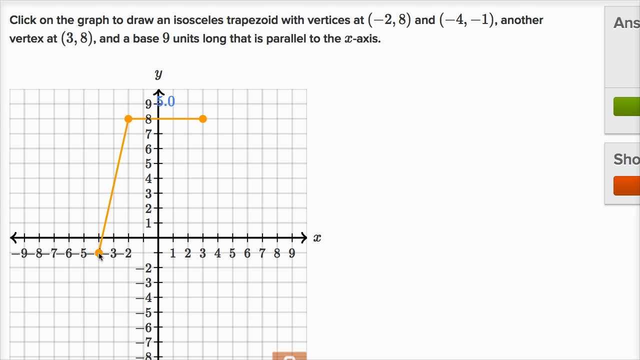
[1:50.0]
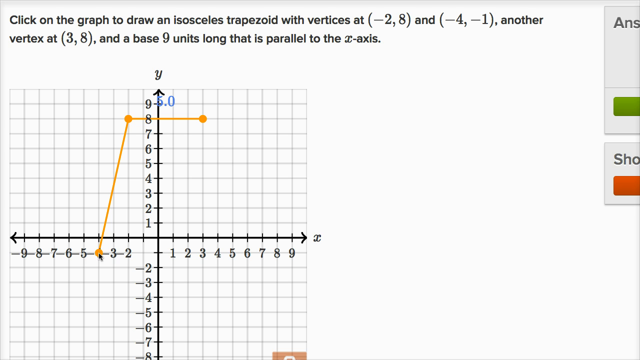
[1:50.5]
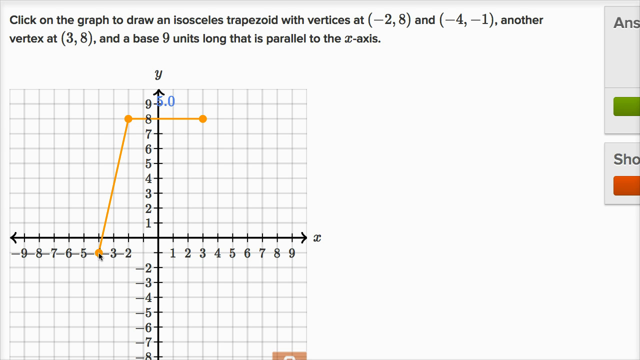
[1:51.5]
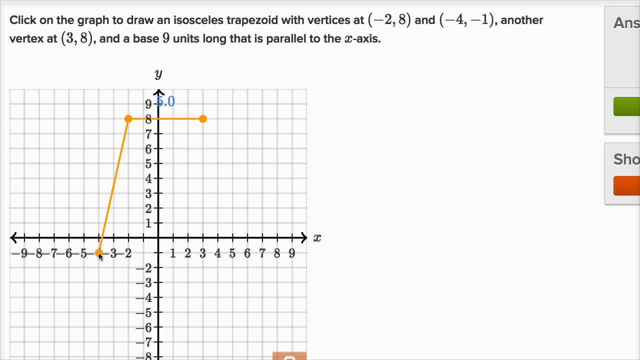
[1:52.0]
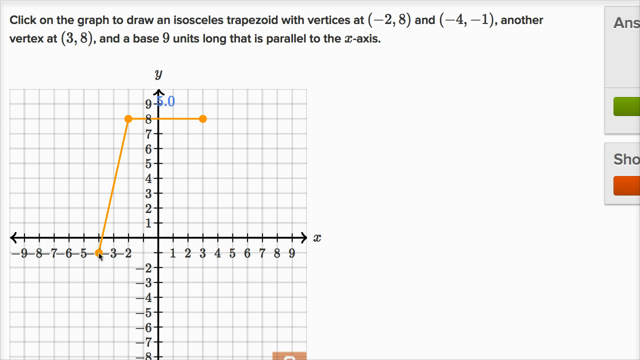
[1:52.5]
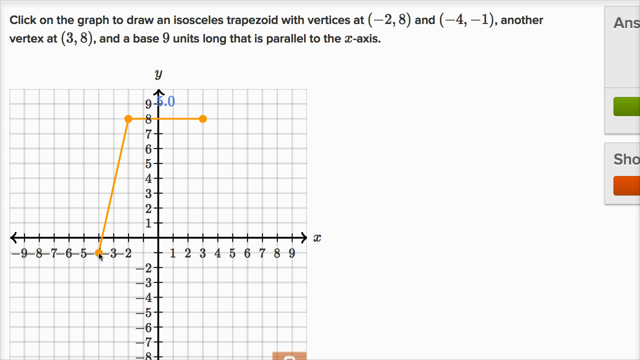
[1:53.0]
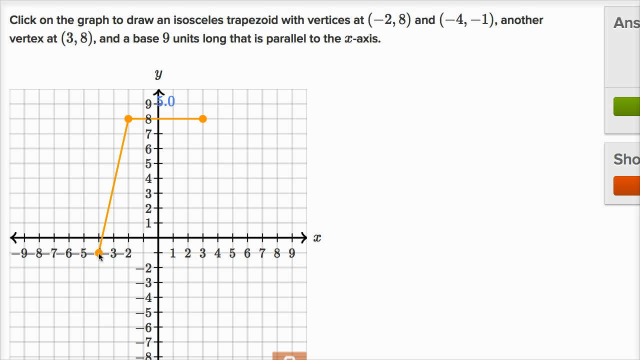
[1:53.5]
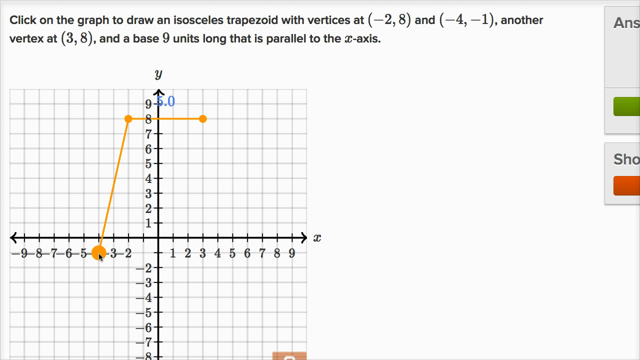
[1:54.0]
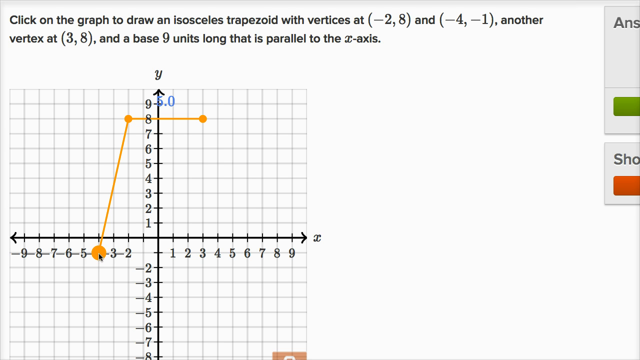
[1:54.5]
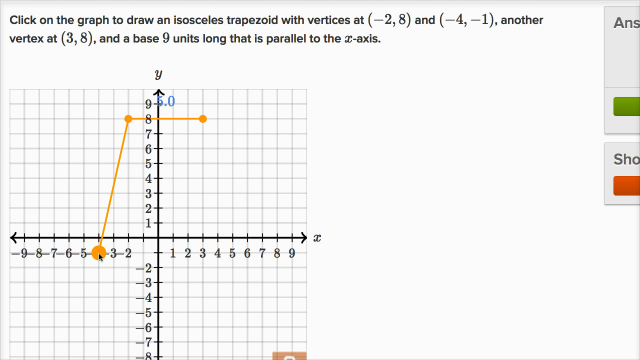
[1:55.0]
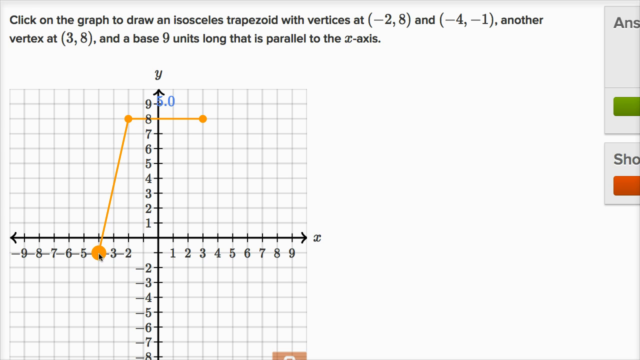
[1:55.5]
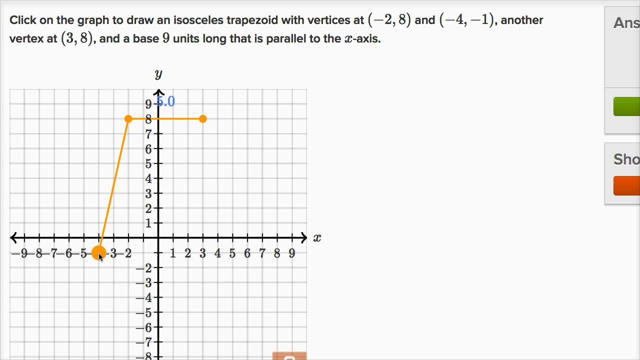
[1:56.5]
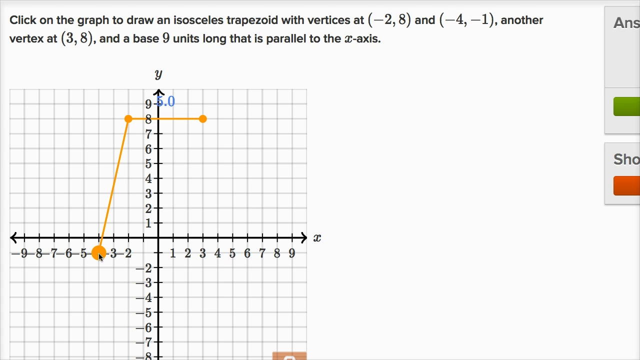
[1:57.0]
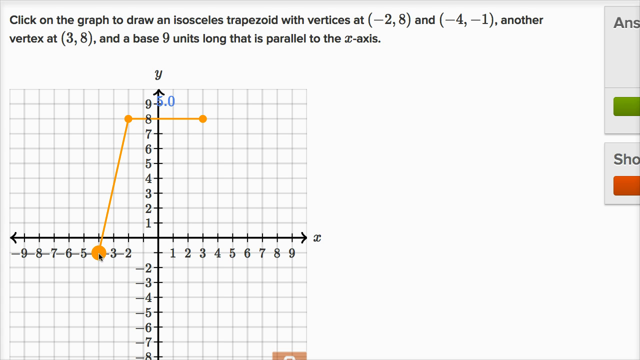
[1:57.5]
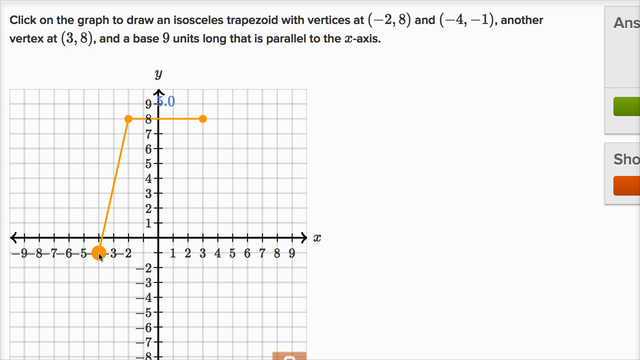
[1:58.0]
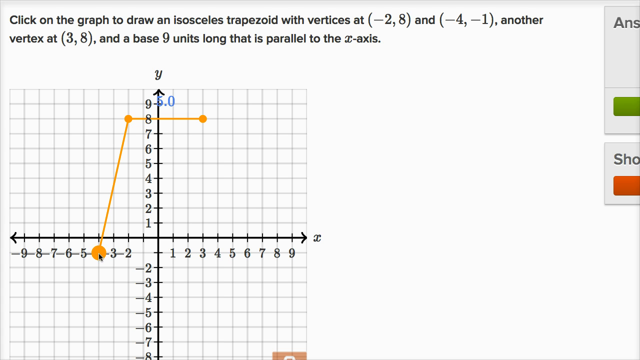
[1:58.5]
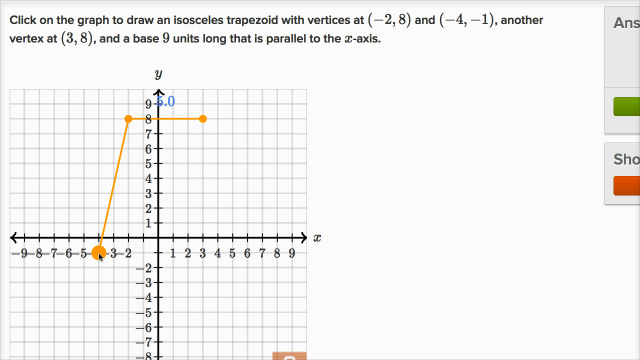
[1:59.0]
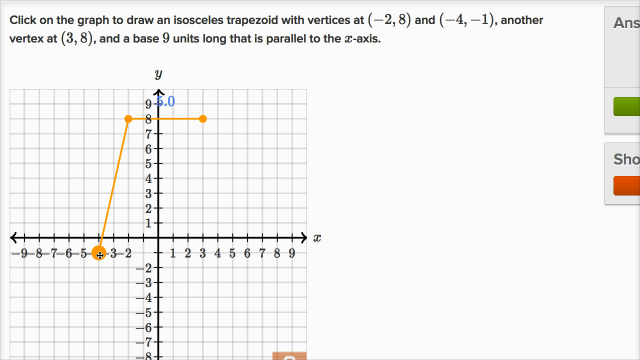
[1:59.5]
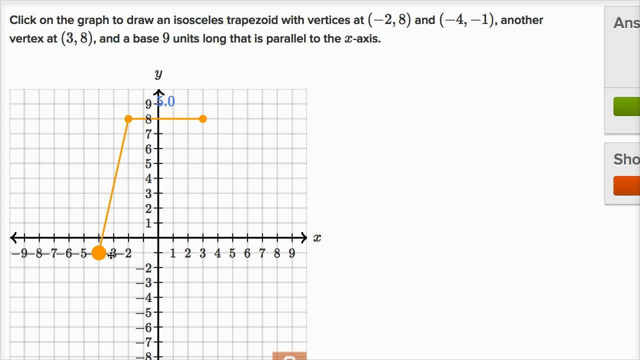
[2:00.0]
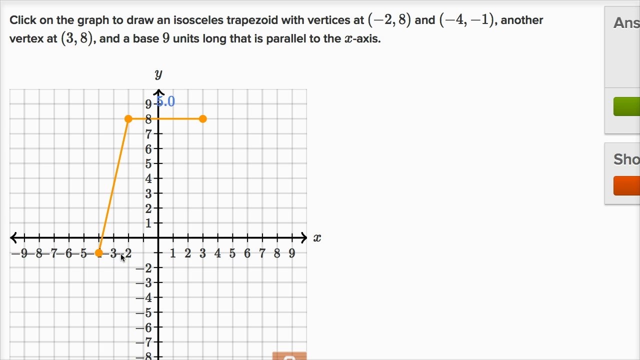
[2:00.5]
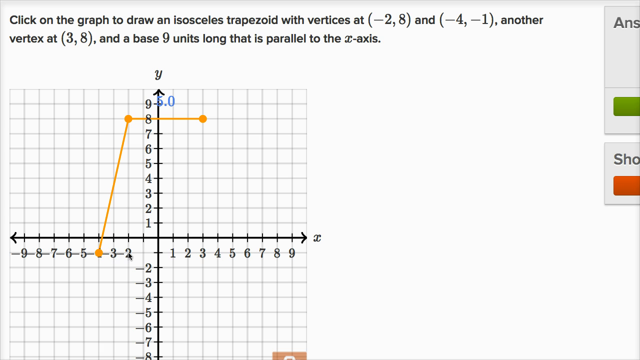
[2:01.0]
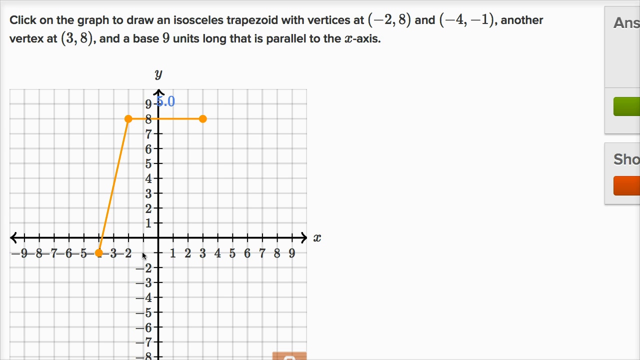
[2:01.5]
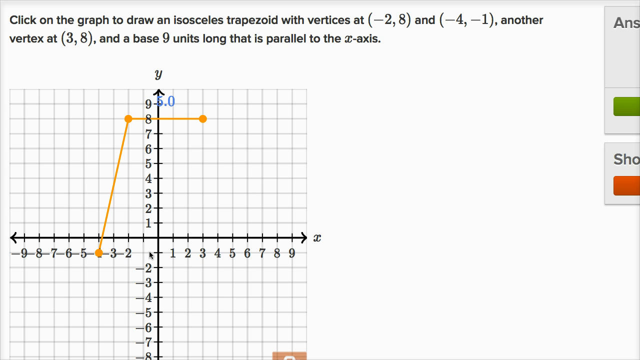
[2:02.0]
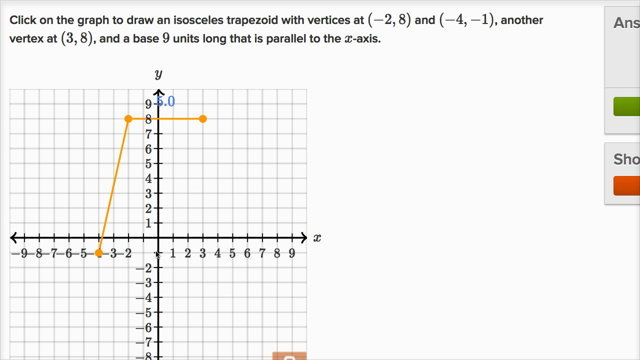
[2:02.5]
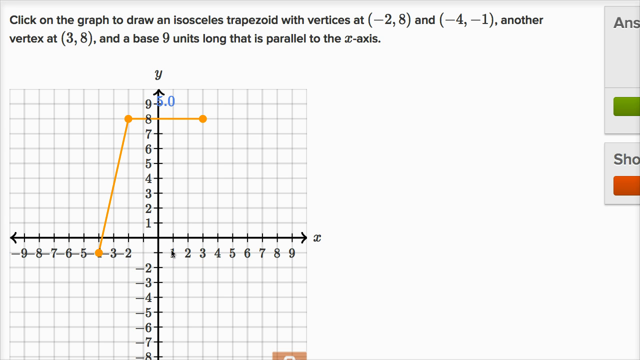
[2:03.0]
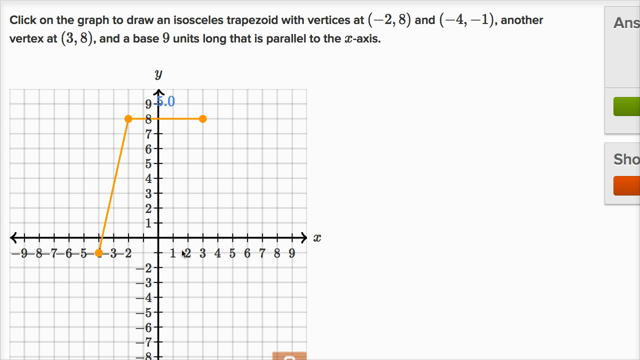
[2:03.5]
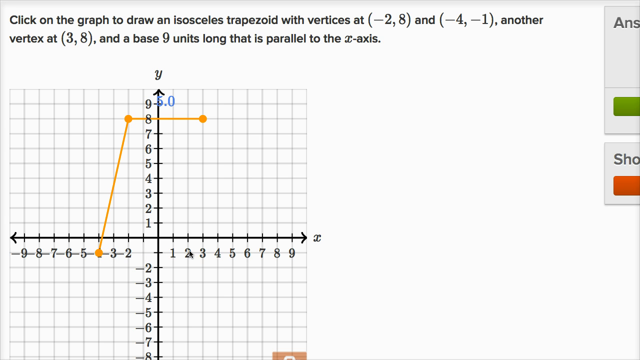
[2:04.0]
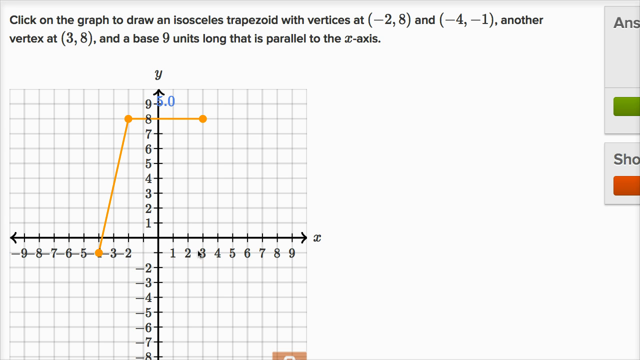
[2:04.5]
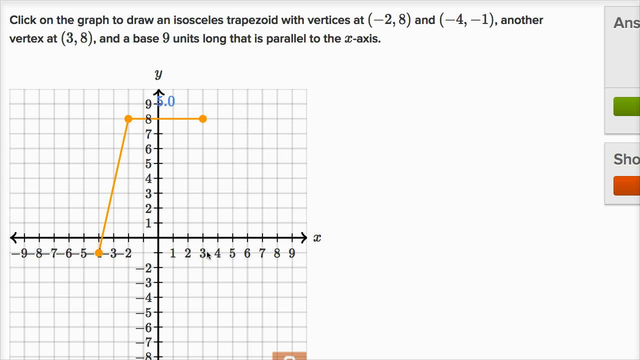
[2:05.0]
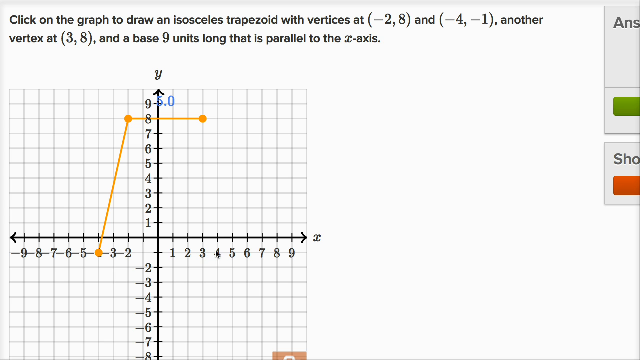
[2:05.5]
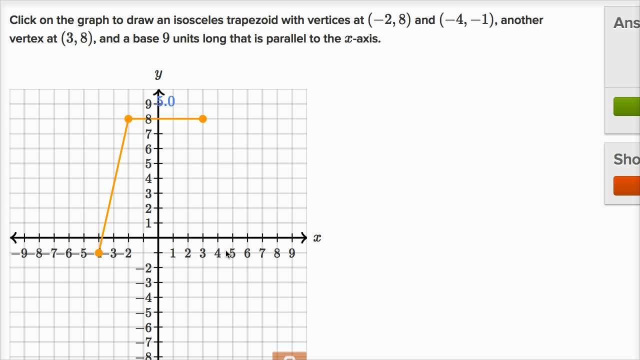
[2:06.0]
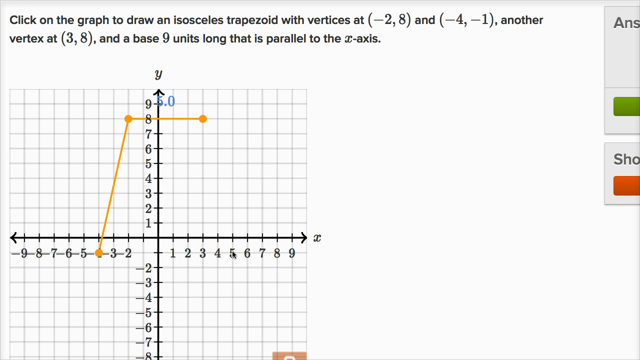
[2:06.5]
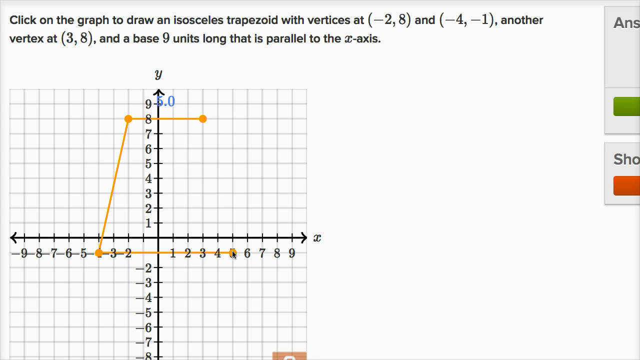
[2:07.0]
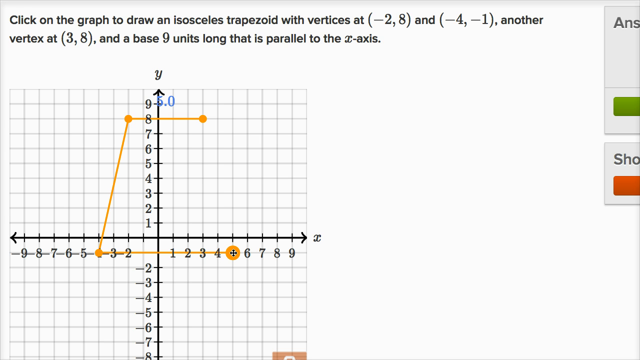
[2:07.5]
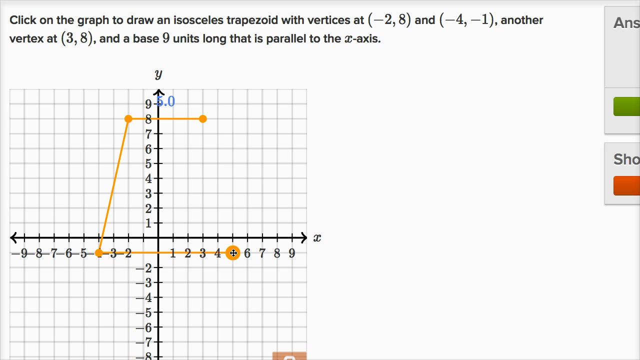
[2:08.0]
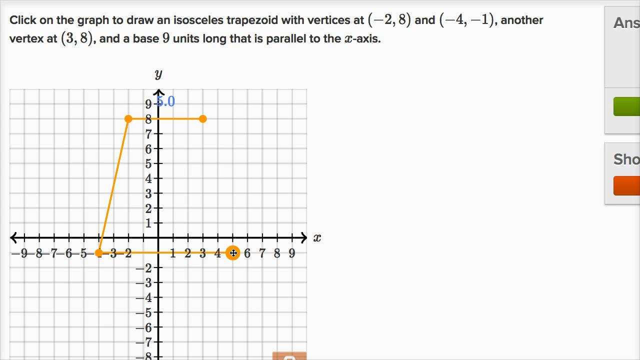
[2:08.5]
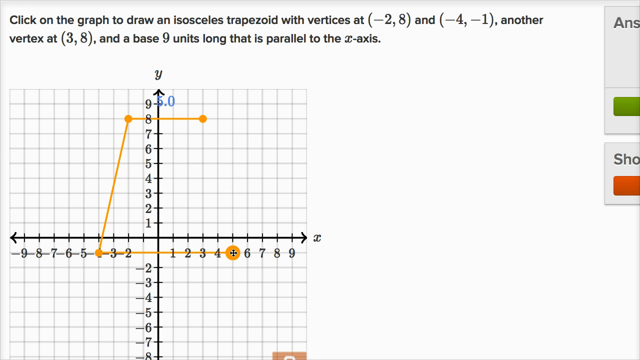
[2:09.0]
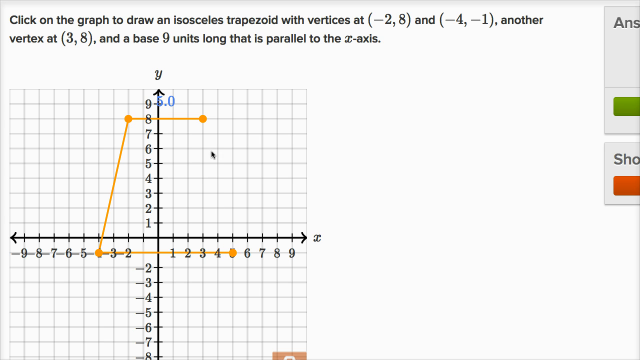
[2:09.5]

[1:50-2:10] The orange line is drawn as a straight line from the 8. From the 8, the drawing jumps one small box, goes up at the end of that small box, and then a line is drawn straight to 4. The vertex at (3, 8) and a base parallel to the axis are shown.